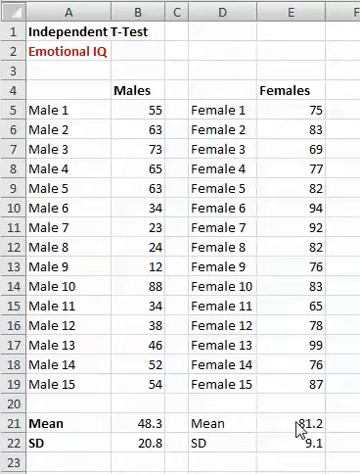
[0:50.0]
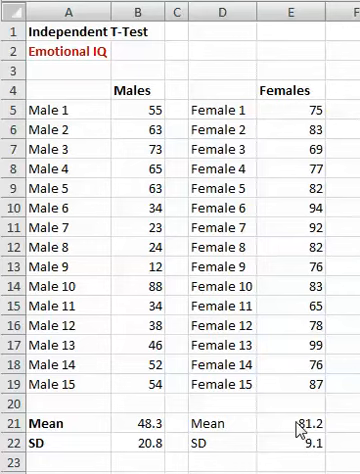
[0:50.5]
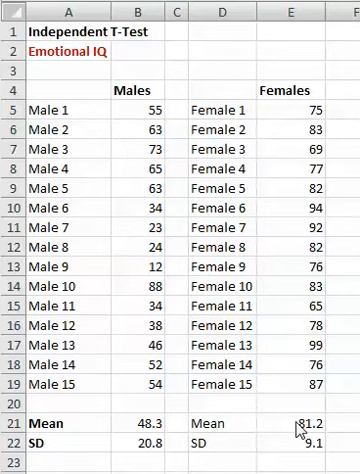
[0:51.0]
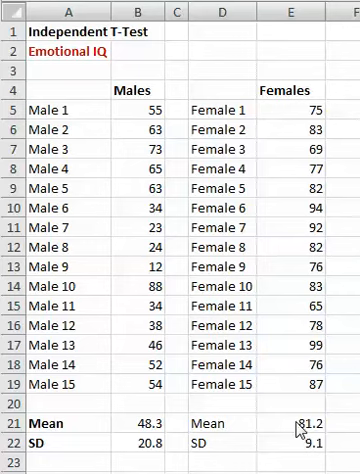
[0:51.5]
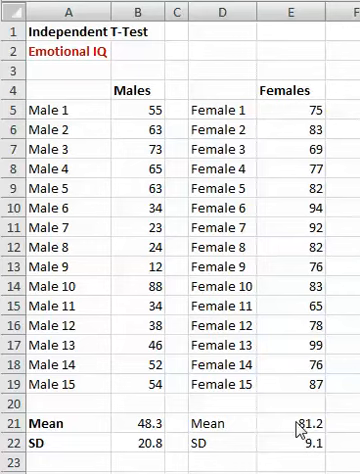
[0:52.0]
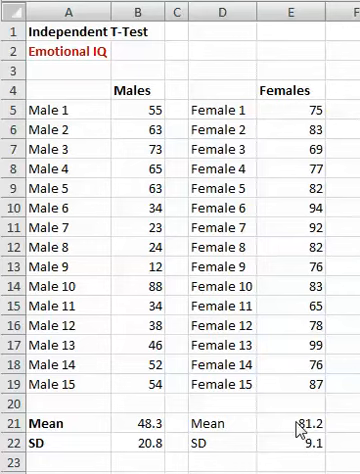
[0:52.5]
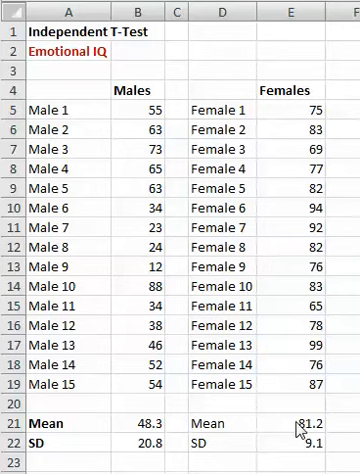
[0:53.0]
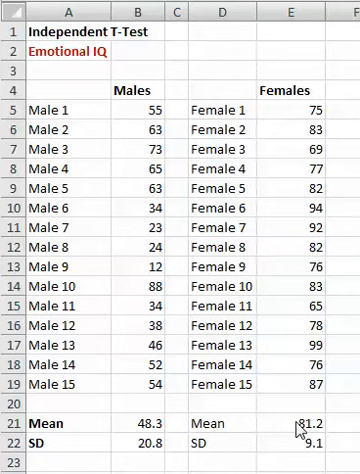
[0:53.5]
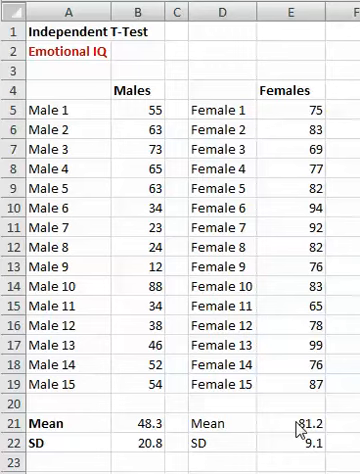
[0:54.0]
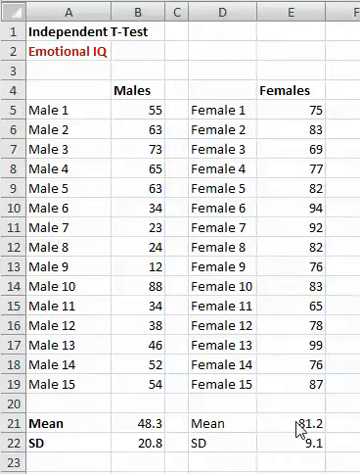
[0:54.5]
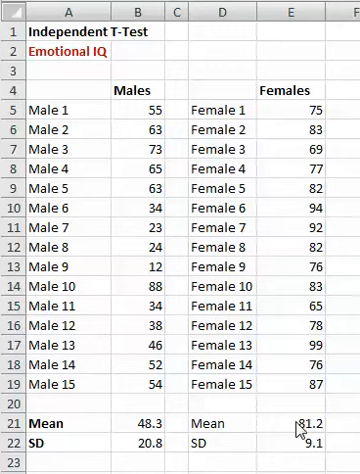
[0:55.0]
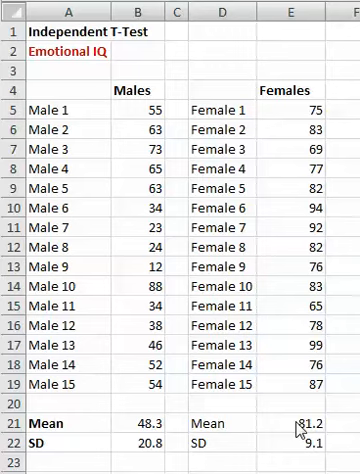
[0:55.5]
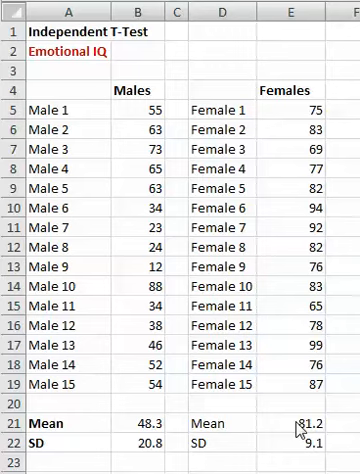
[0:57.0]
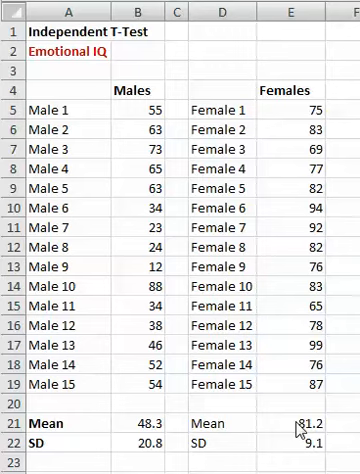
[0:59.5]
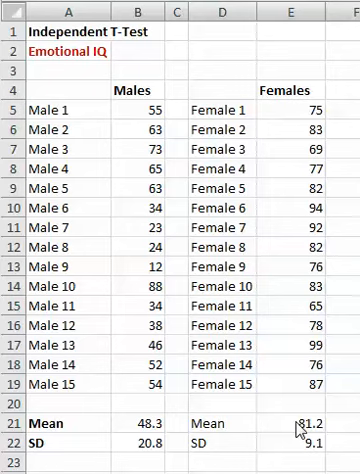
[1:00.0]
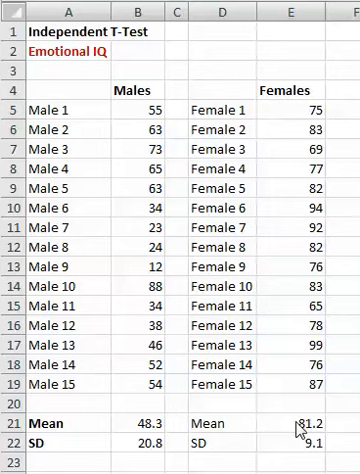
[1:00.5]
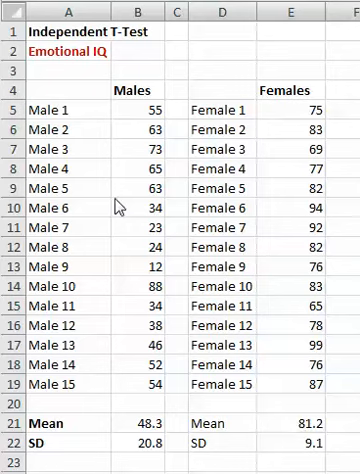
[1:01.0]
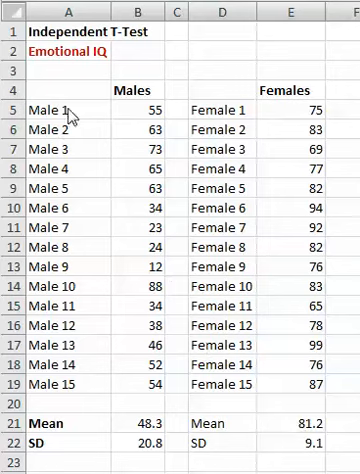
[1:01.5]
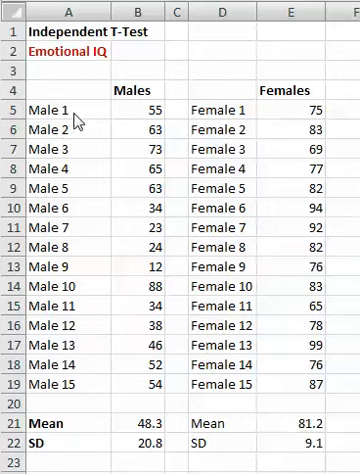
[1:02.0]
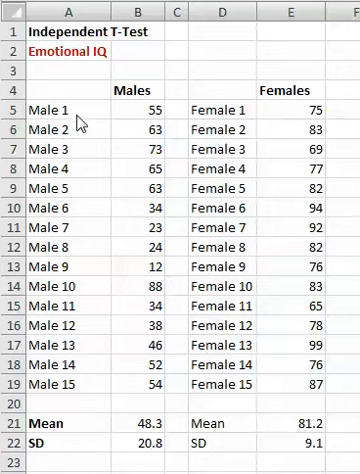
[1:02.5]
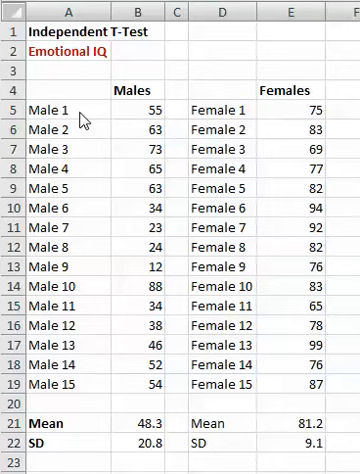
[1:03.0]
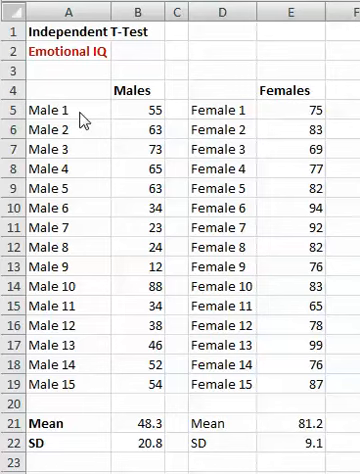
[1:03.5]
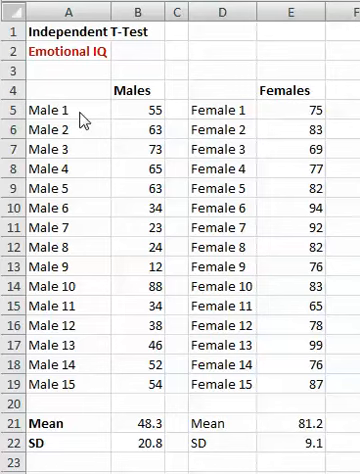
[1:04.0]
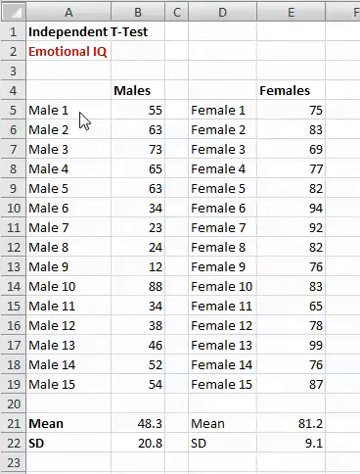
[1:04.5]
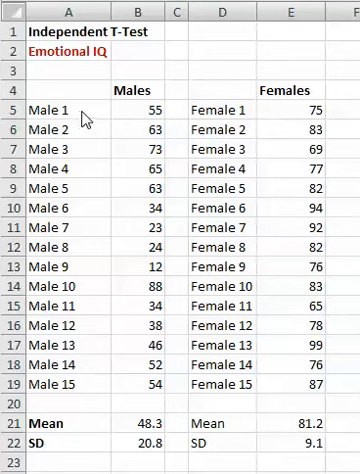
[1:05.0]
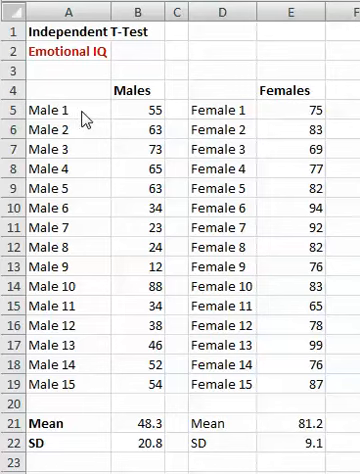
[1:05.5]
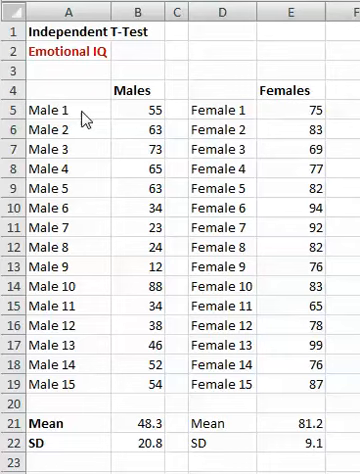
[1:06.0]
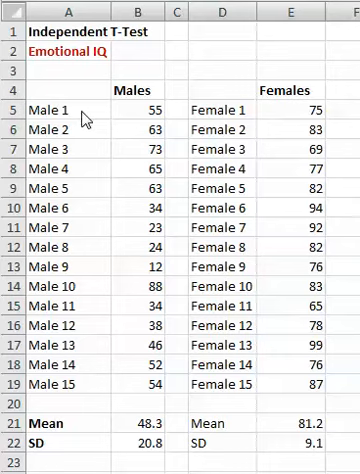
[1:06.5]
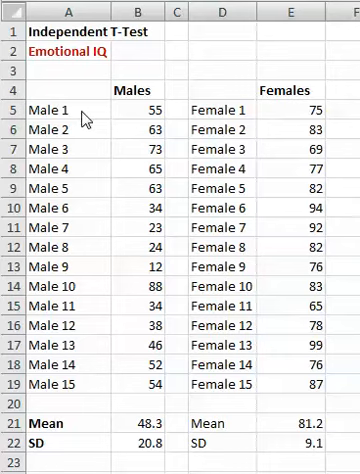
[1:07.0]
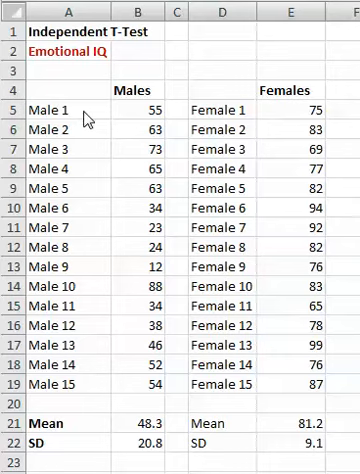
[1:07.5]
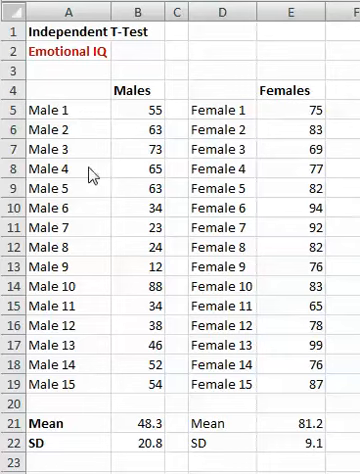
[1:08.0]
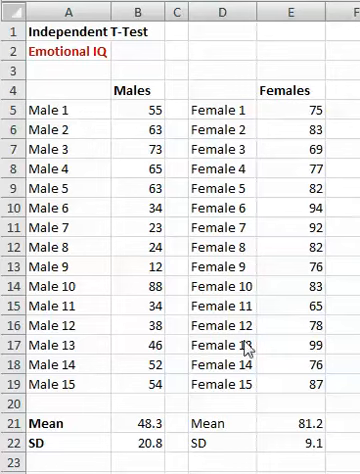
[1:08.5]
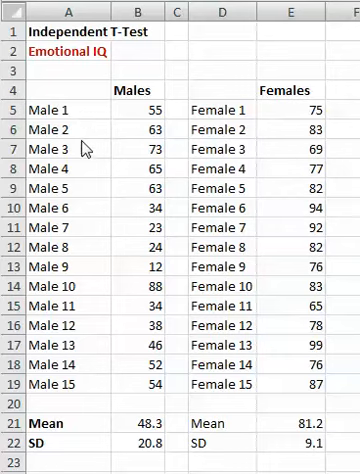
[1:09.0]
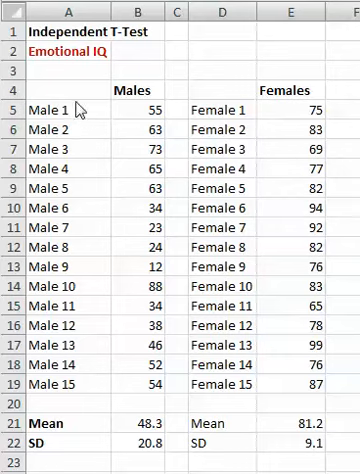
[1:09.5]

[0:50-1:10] The table is shown in Microsoft Excel with the title "Independent T-Test, Emotional IQ" and cells for males and females. Males 1 through 15 have the values 55, 63, 73, 65, 63, 34, 23, 24, 12, 88, 34, 38, 46, 52 and 54, with a mean of 48.3 and an SD of 20.8. Females 1 through 15 have the values 75, 83, 69, 77, 82, 94, 92, 82, 76, 83, 65, 78, 79, 76 and 80, with a mean of 81.2 and an SD of 9.1. The mouse cursor runs through some of the cells, pointing out statistics.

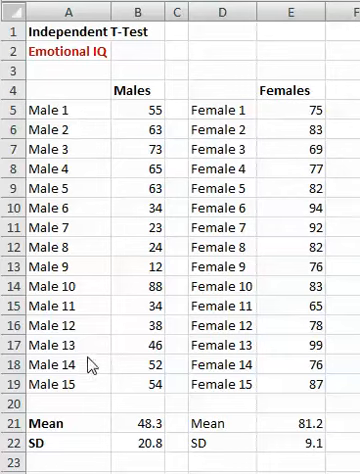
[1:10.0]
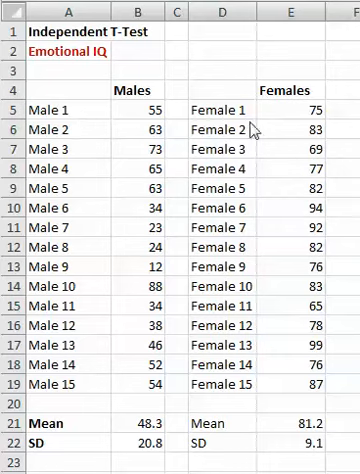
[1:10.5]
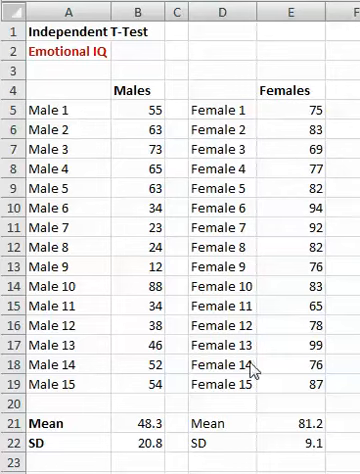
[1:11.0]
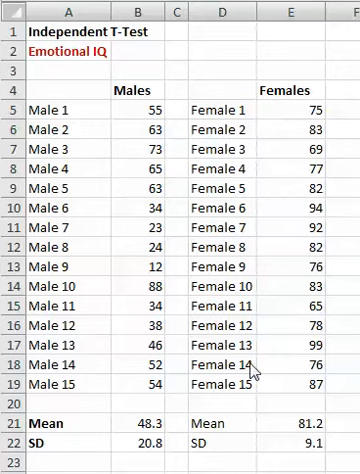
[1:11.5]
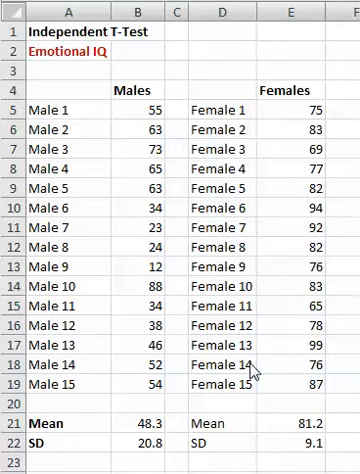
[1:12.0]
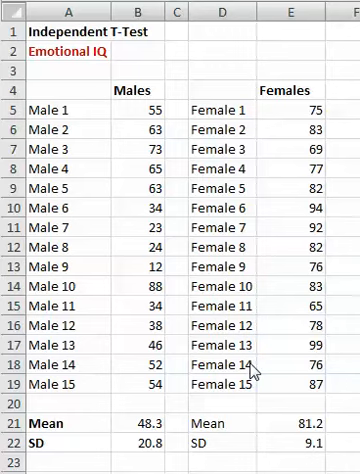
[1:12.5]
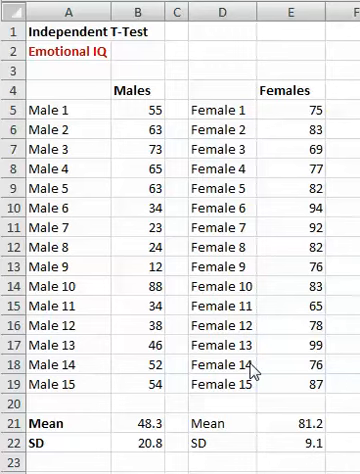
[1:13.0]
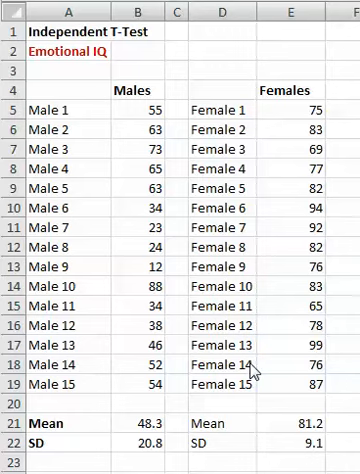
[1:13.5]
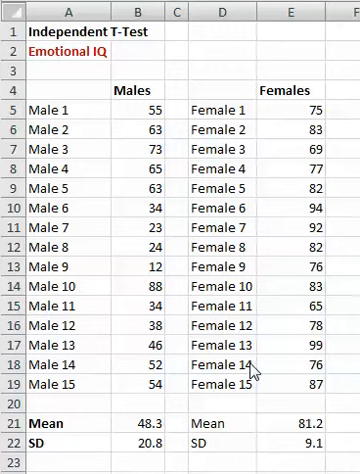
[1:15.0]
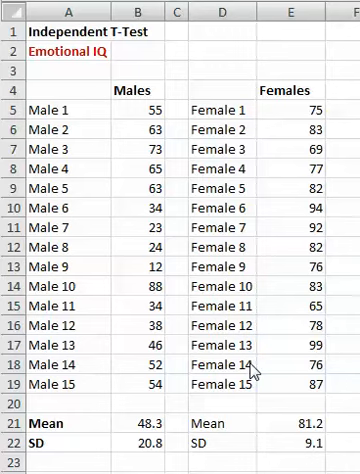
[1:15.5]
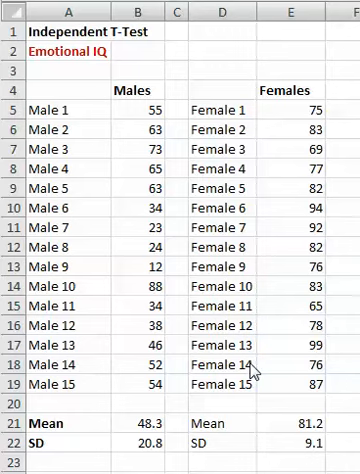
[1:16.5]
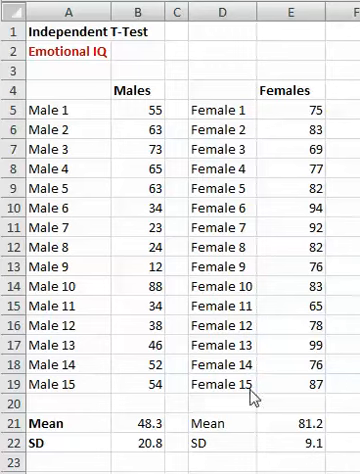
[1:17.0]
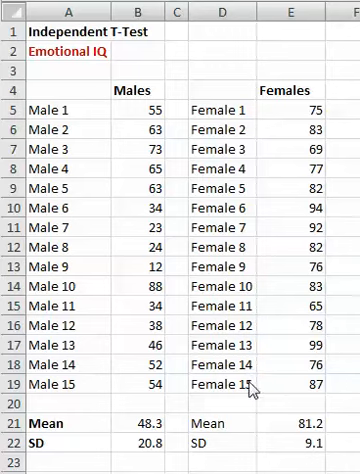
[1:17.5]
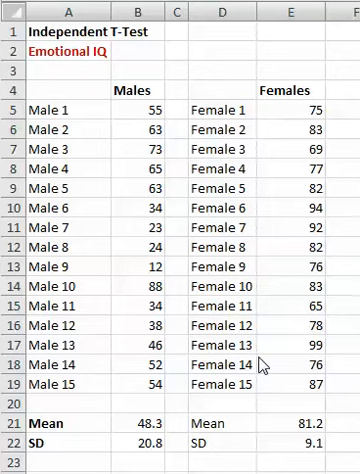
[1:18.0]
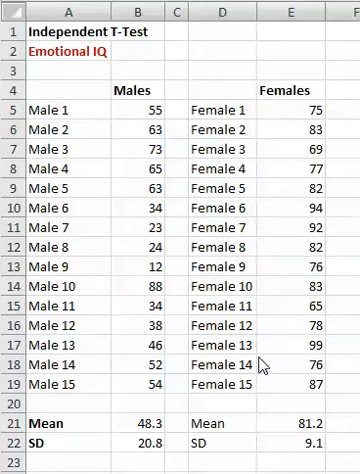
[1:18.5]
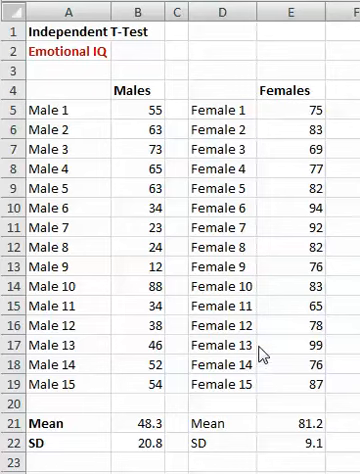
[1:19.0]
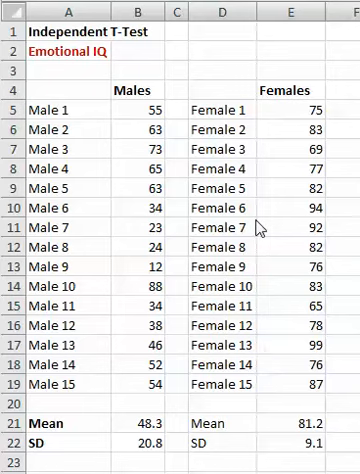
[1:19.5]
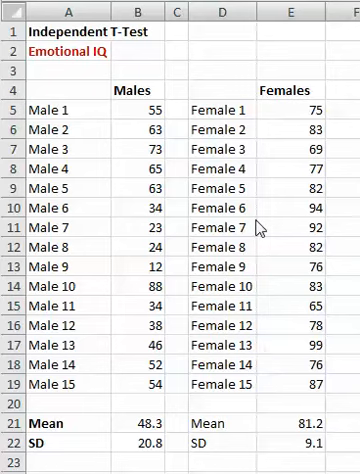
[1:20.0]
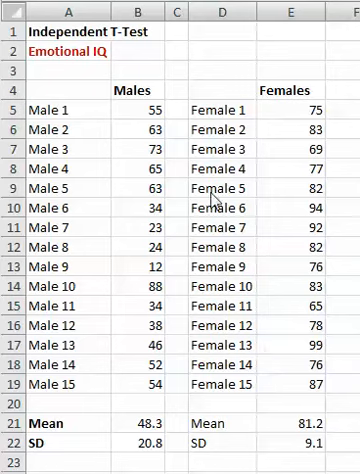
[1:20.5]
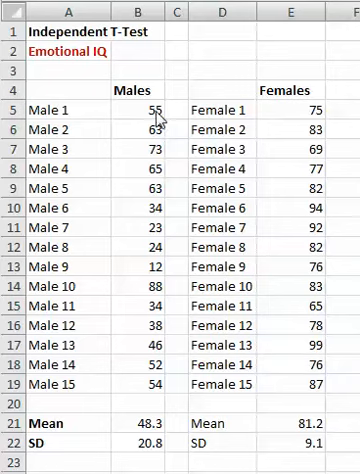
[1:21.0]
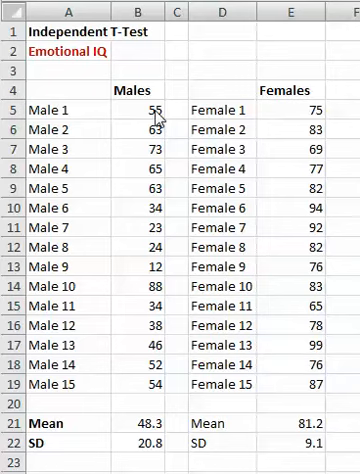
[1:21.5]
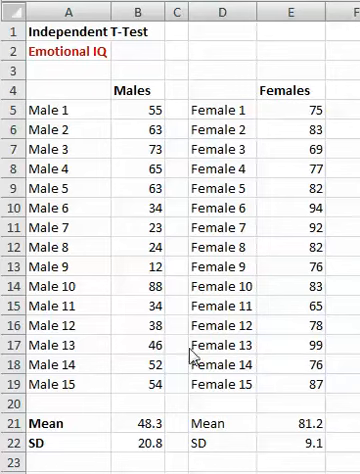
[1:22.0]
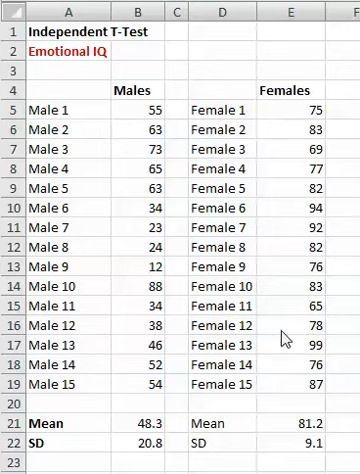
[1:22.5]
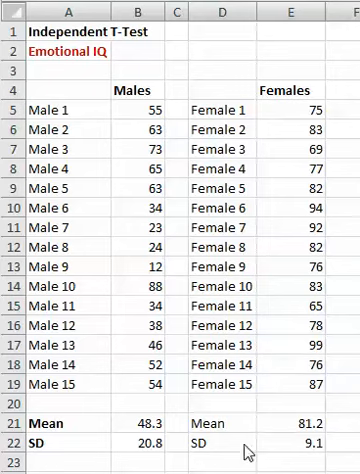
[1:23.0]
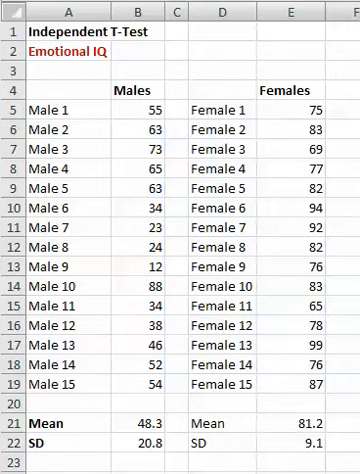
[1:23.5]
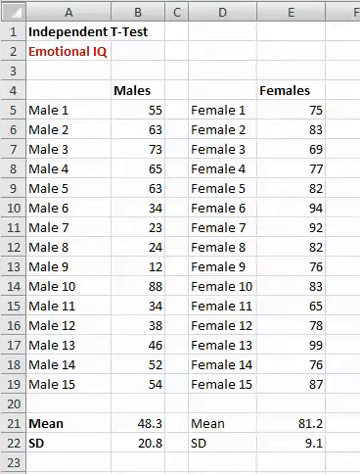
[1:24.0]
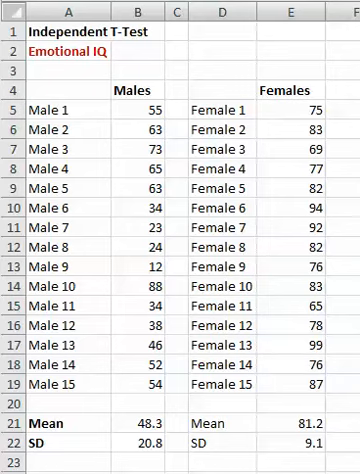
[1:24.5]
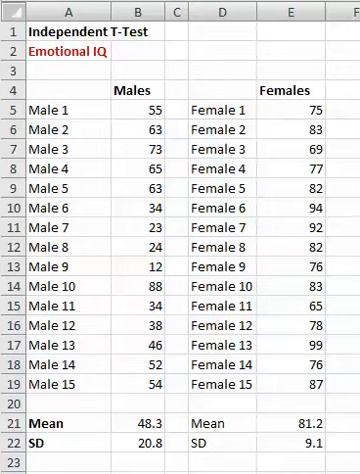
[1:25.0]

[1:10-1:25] The same emotional IQ table is shown in Microsoft Excel, with cells for males and females. Males 1 through 15 have the values 55, 63, 73, 65, 63, 34, 23, 24, 12, 88, 34, 38, 46, 52 and 54, with a mean of 48.3 and an SD of 20.8. Females 1 through 15 have the values 75, 83, 69, 77, 82, 94, 92, 82, 76, 83, 65, 78, 99, 76 and 87, with a mean of 81.2 and an SD of 9.1. The mouse cursor runs through the table.